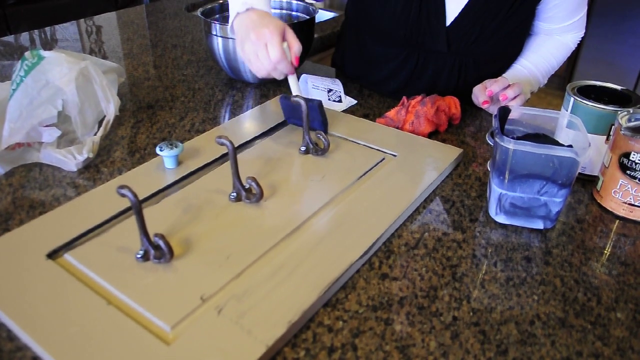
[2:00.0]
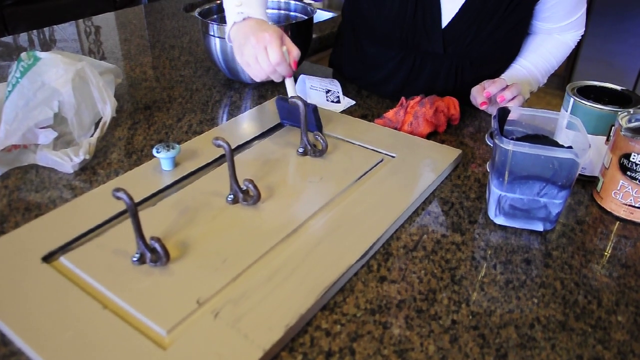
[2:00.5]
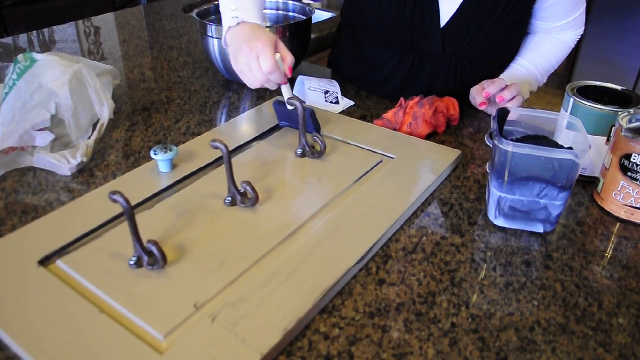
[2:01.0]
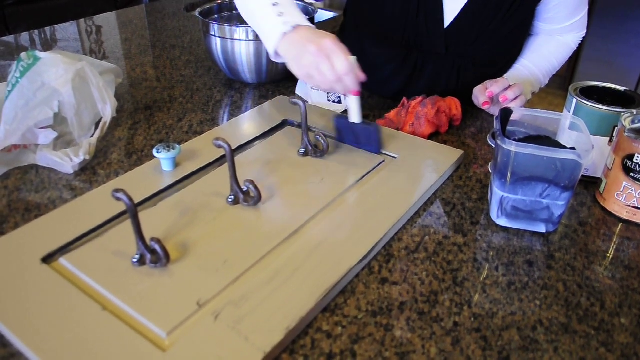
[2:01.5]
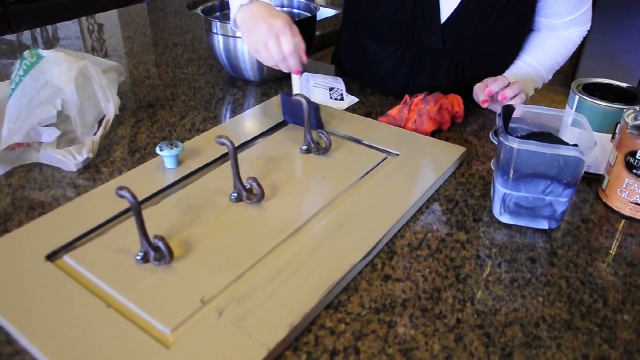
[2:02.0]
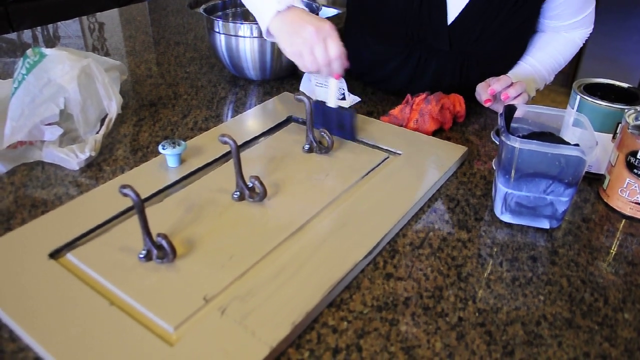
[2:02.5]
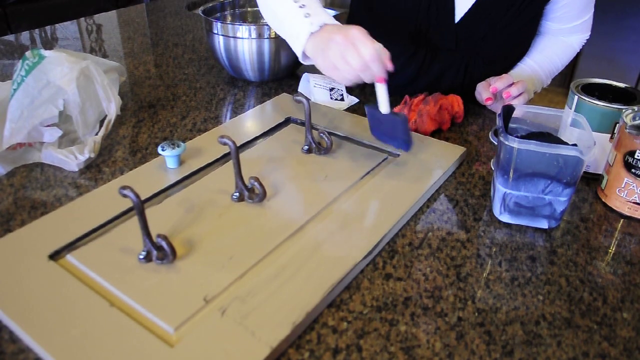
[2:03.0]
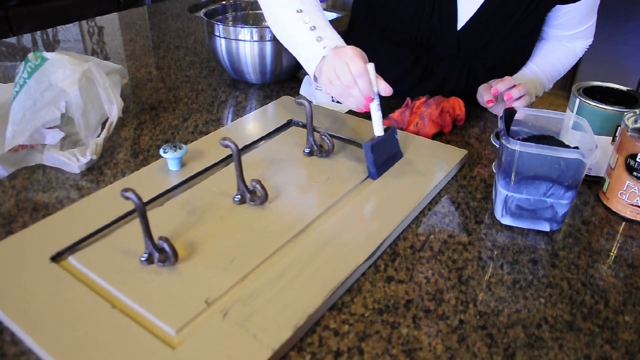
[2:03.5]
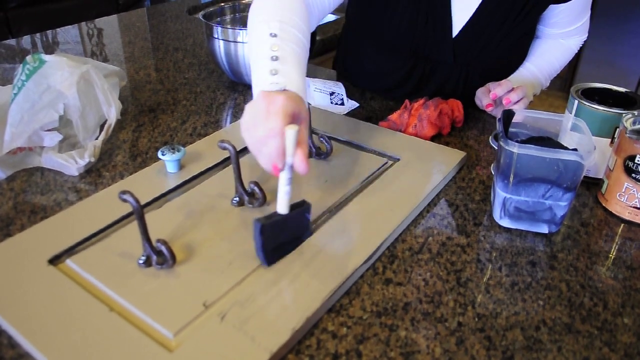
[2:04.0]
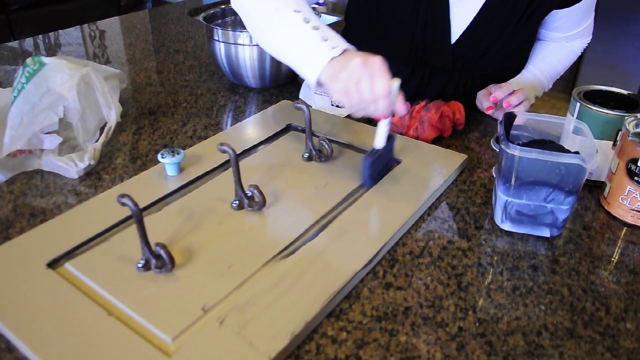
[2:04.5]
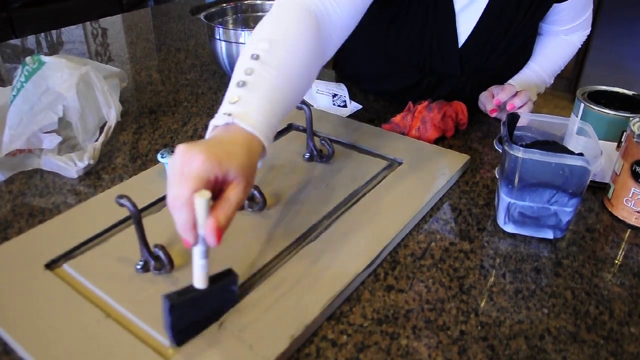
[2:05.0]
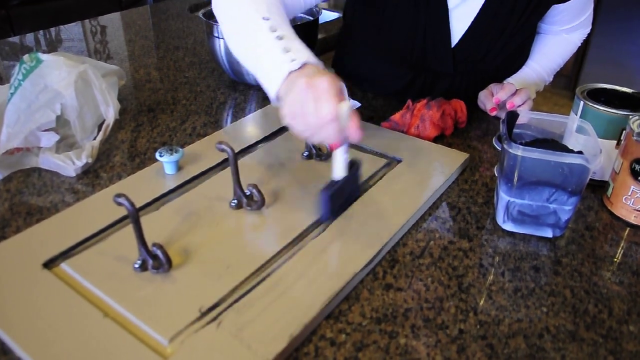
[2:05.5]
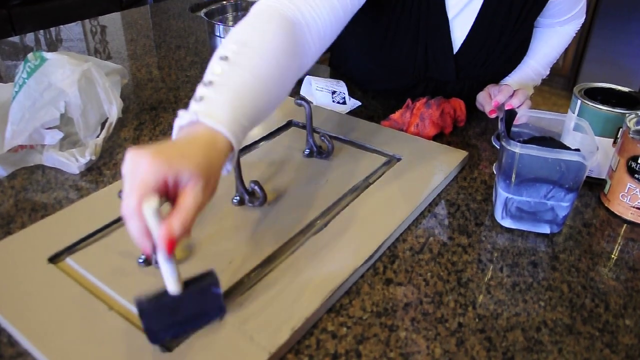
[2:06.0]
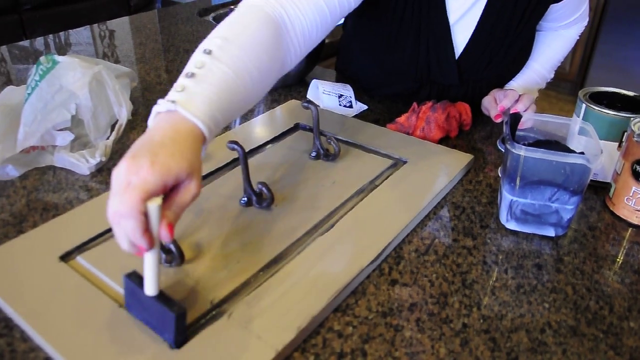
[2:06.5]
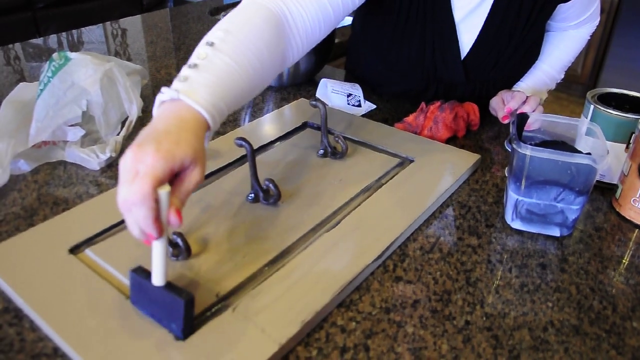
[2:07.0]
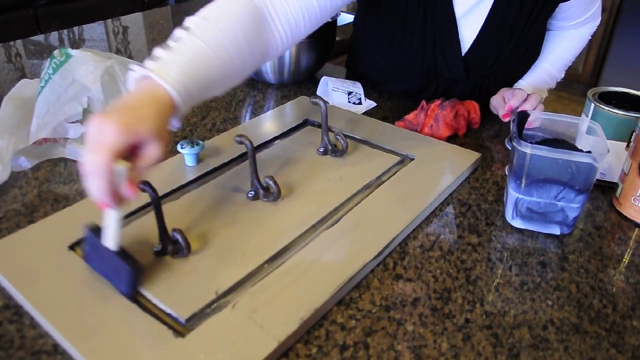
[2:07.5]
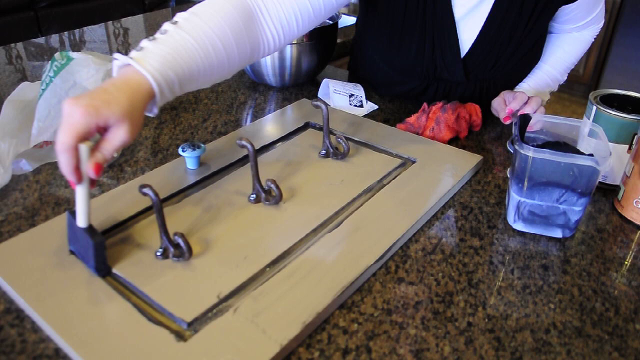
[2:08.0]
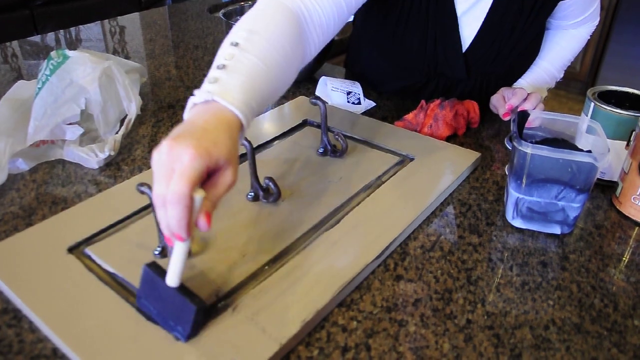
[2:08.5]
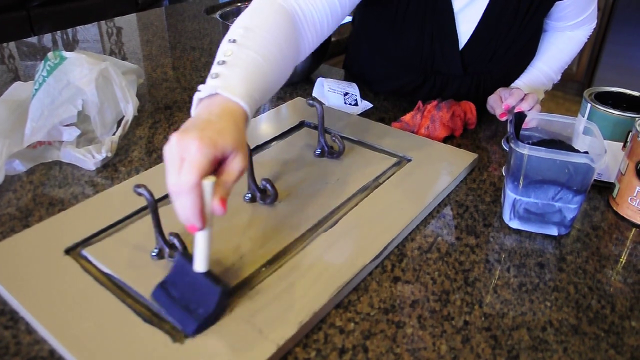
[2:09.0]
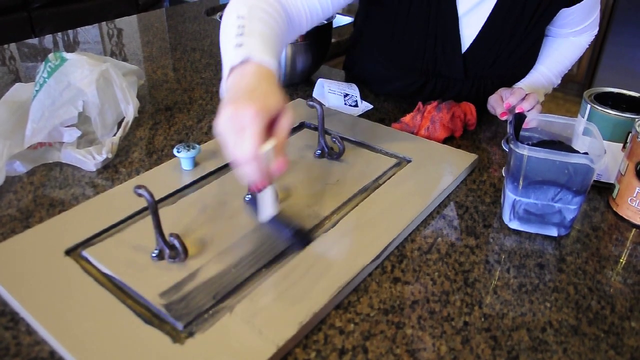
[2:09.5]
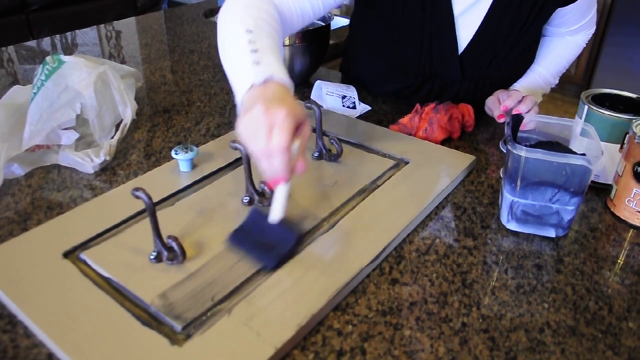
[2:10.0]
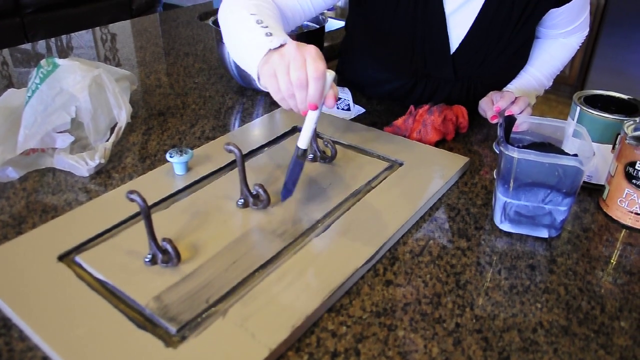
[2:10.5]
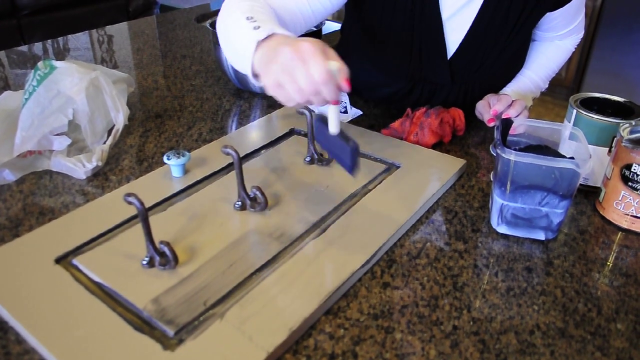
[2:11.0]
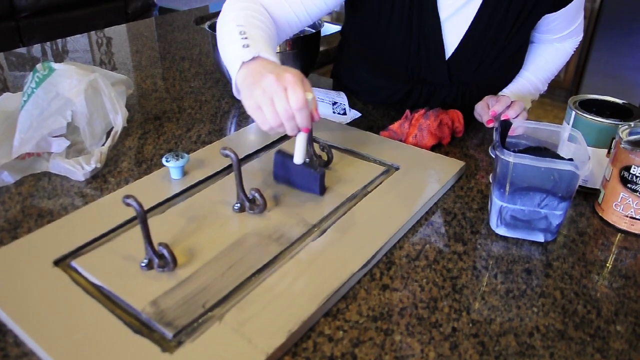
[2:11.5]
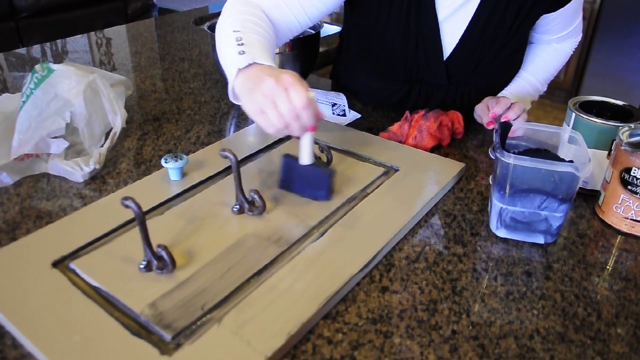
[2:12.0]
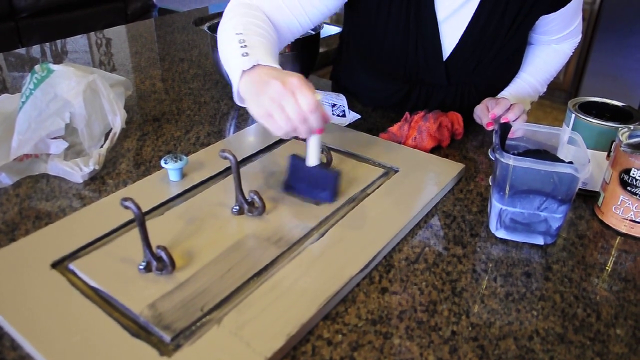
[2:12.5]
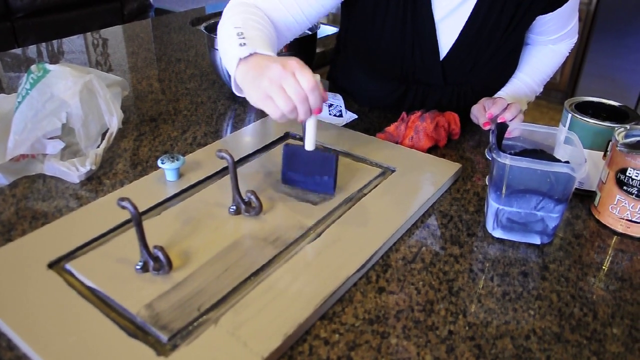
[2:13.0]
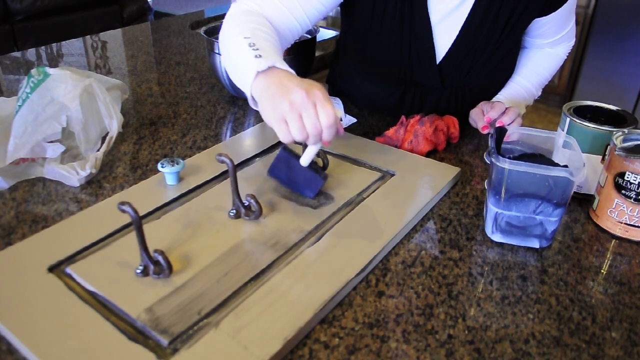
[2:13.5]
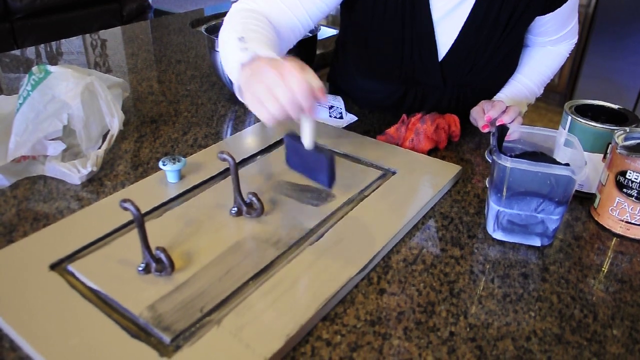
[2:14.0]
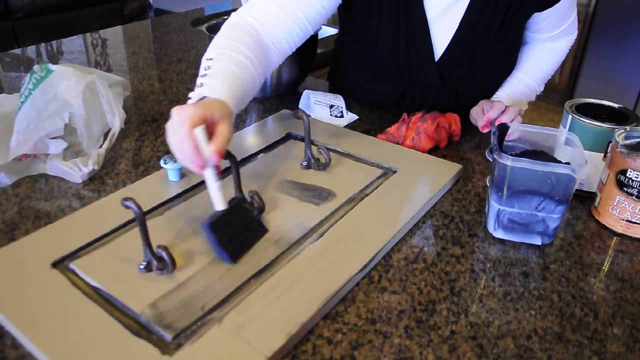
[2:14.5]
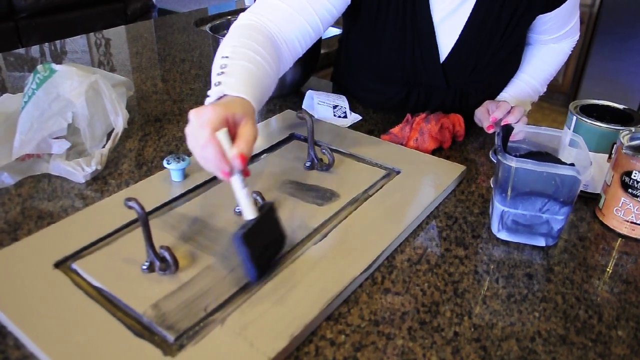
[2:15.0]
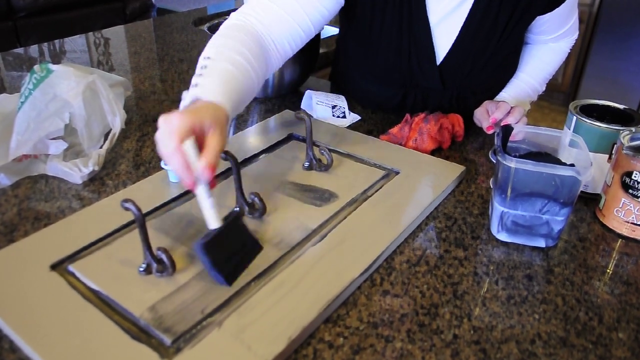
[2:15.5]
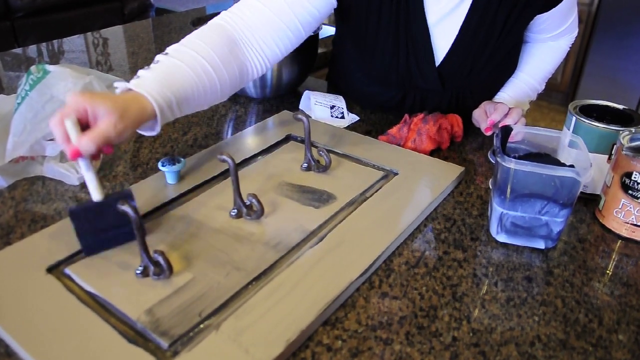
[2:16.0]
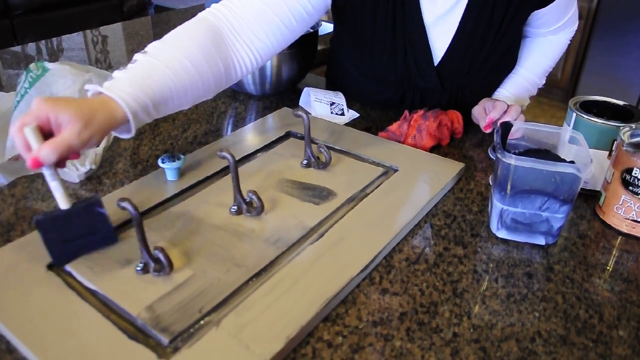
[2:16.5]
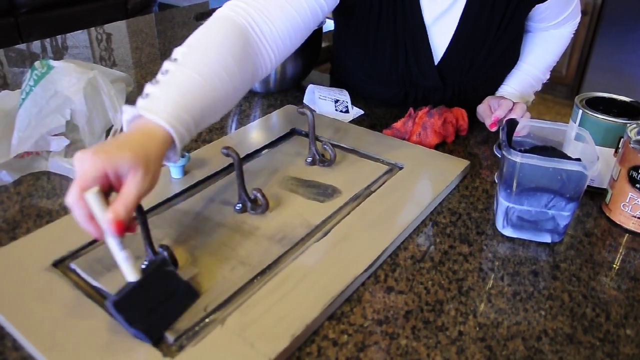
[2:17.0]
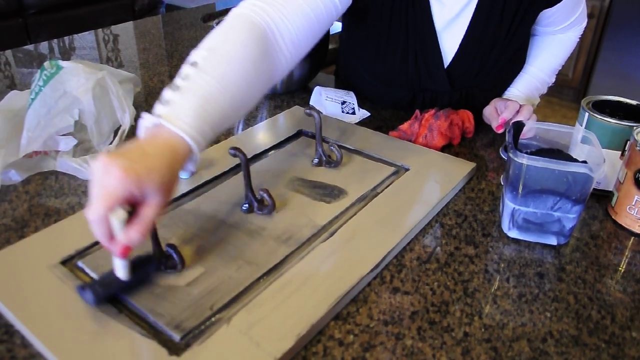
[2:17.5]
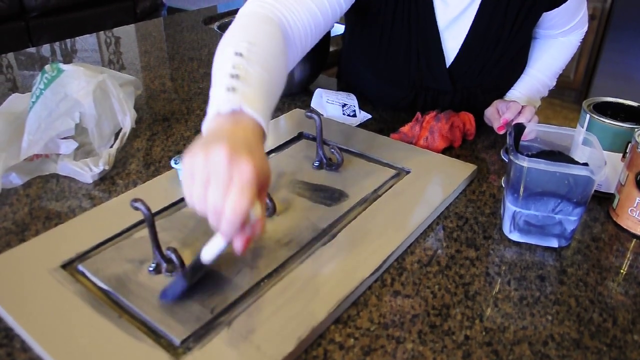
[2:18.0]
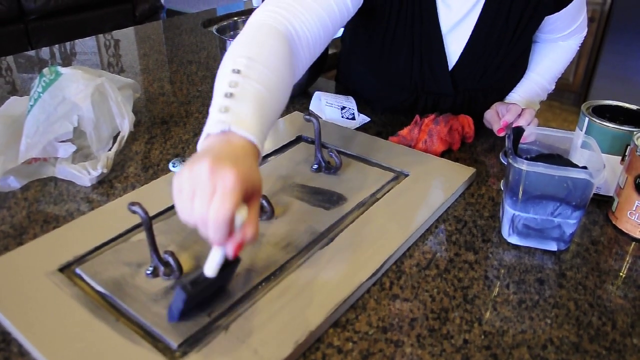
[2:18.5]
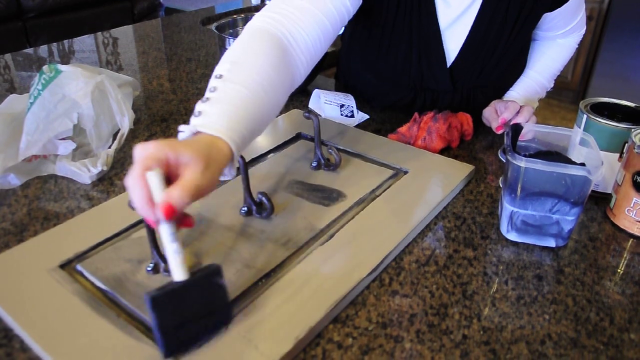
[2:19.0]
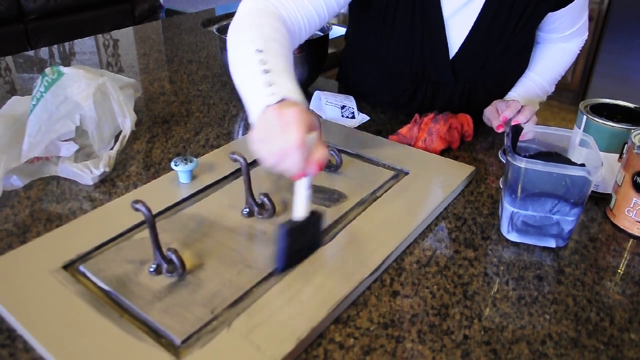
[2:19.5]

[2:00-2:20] In the YouTube video called How to Glaze Furniture, a woman uses a sponge-type paintbrush that is kind of pointy at the top, dipped in glaze, on a rectangular piece of wood. The wood has a groove in its center forming another rectangle, with three metal hooks inside it. She applies glaze in the groove first, going all the way around it with the brush and filling in the whole rectangle of the groove. Then she moves the brush to the center and applies glaze around the hooks, kind of randomly, a bit here and a bit there, making sure it gets deeply into the grooves and starting to fill the center piece. She does all of this with her right hand while her left hand rests on the counter.